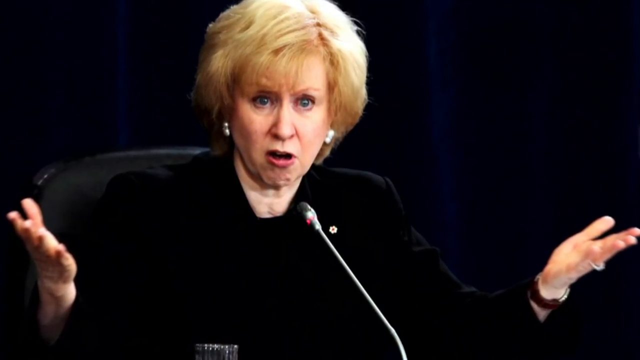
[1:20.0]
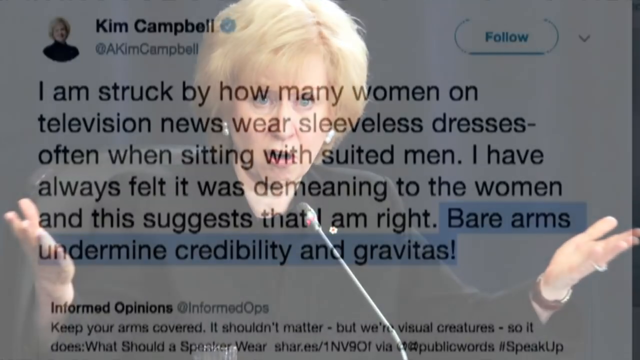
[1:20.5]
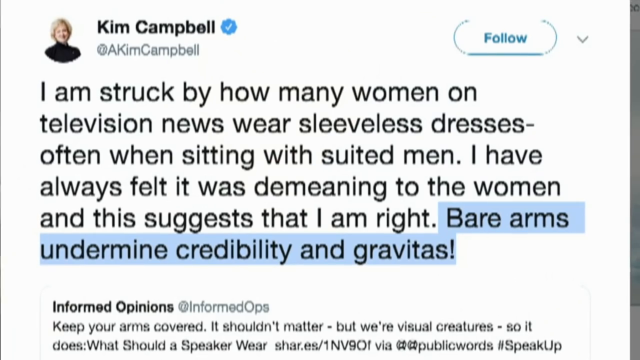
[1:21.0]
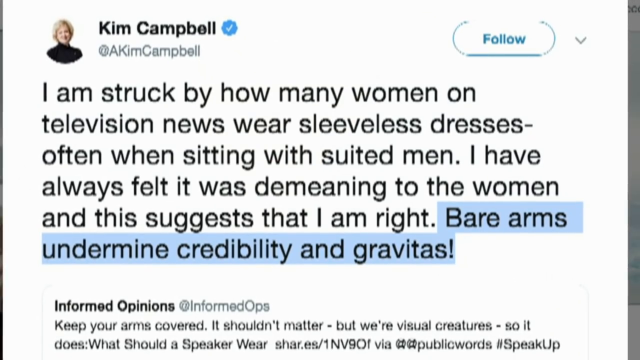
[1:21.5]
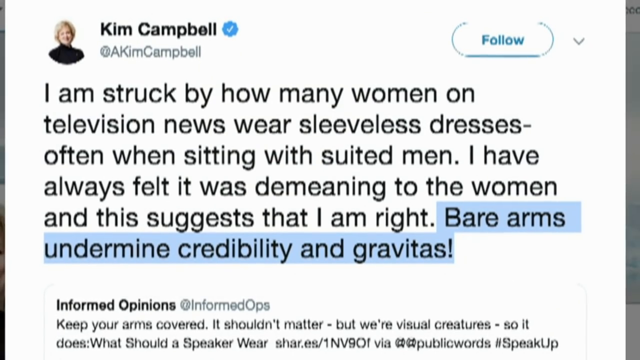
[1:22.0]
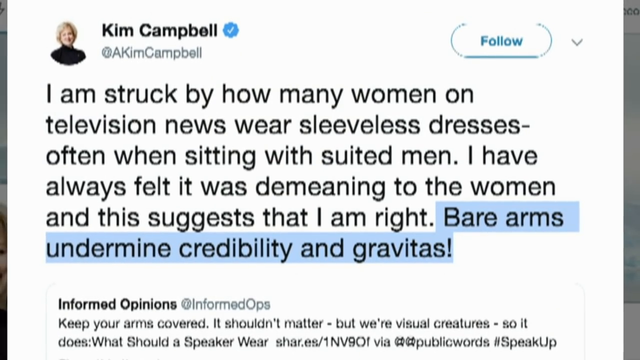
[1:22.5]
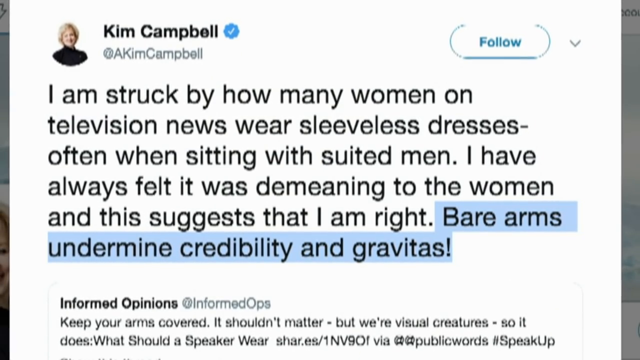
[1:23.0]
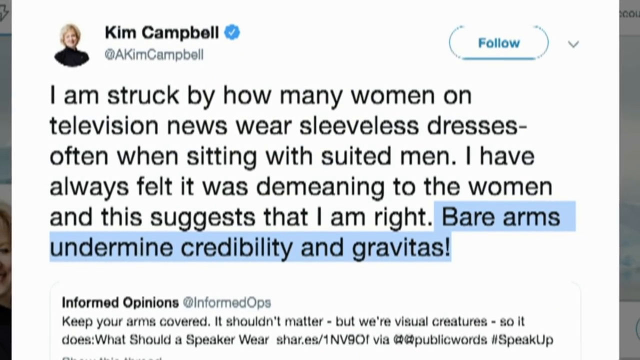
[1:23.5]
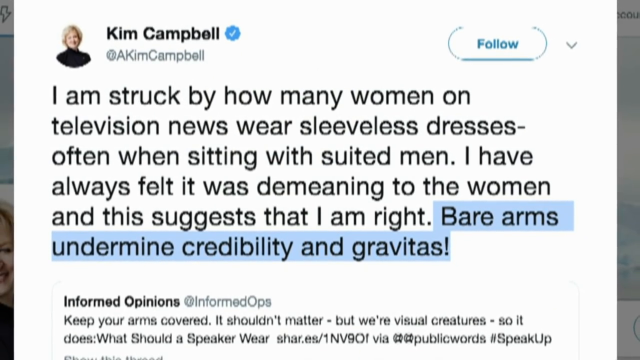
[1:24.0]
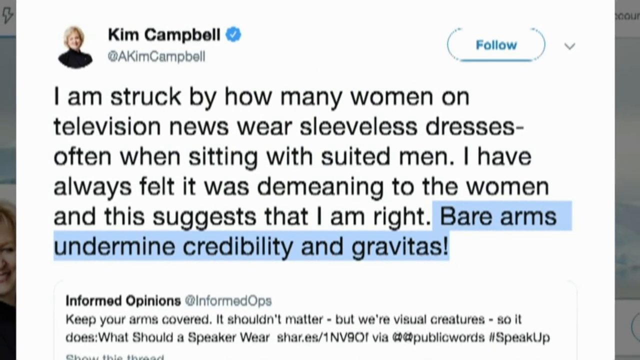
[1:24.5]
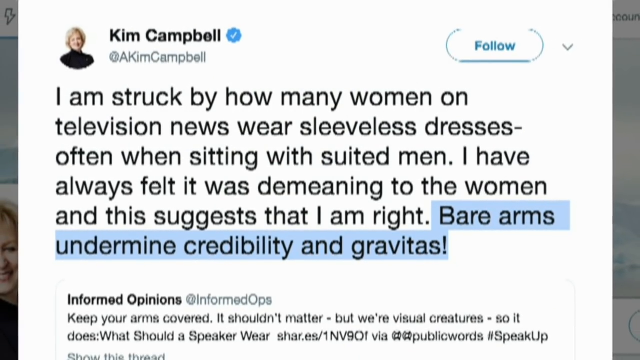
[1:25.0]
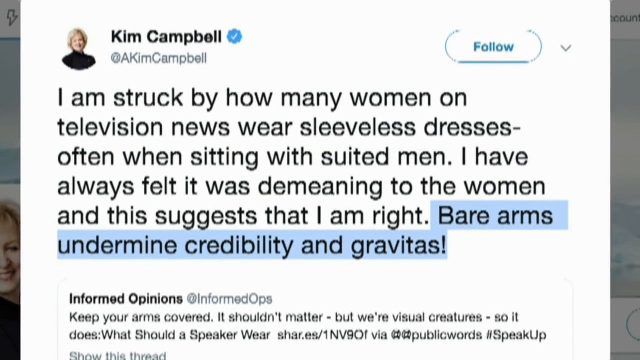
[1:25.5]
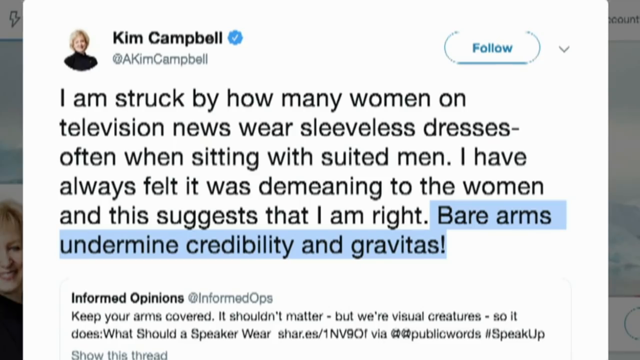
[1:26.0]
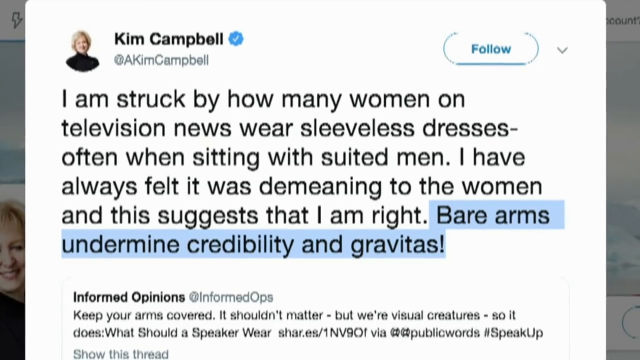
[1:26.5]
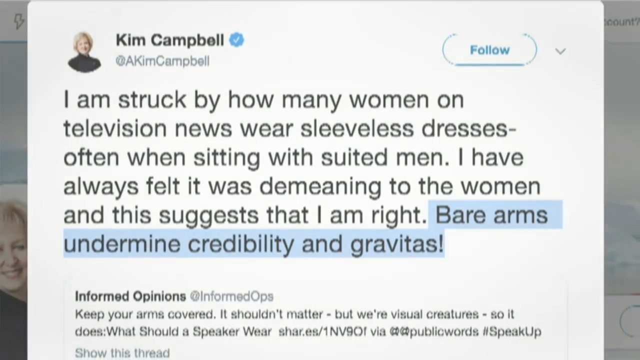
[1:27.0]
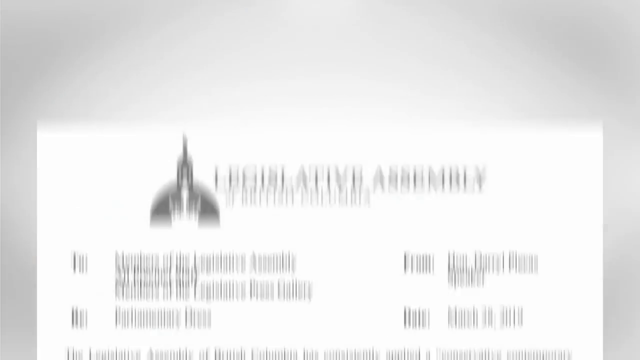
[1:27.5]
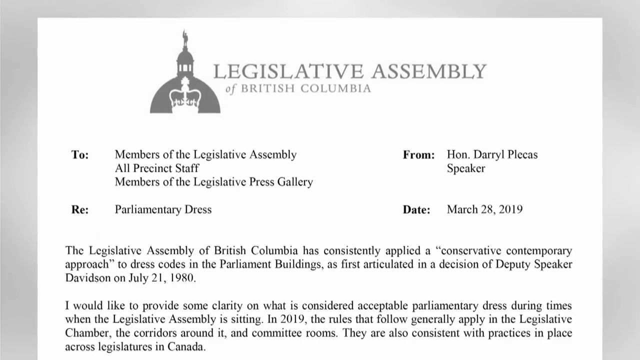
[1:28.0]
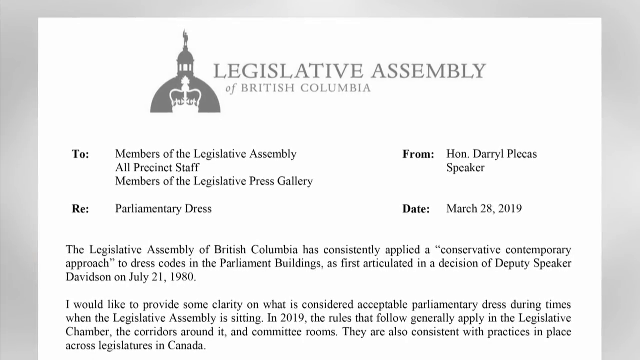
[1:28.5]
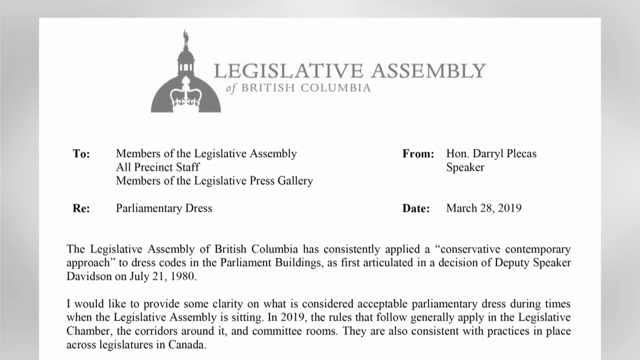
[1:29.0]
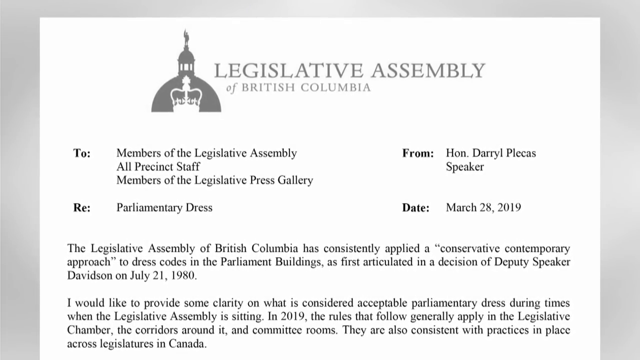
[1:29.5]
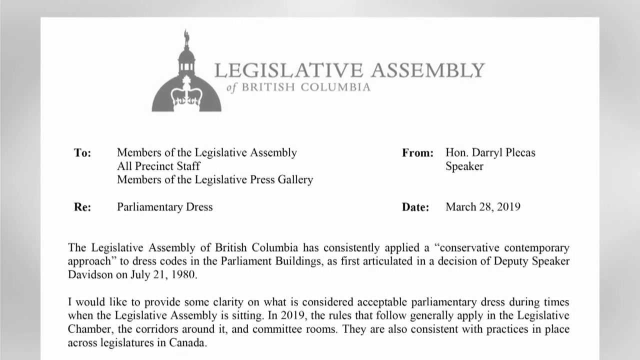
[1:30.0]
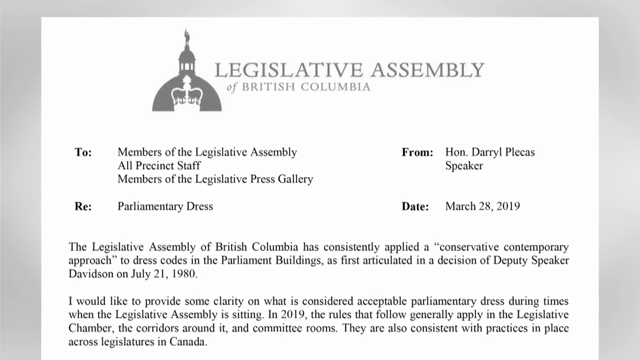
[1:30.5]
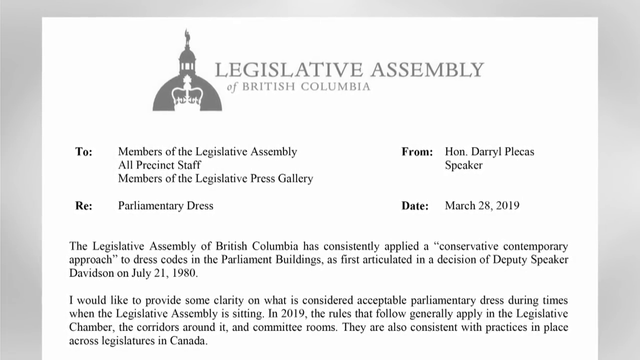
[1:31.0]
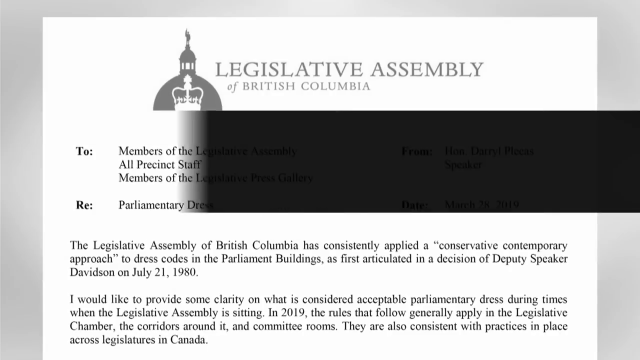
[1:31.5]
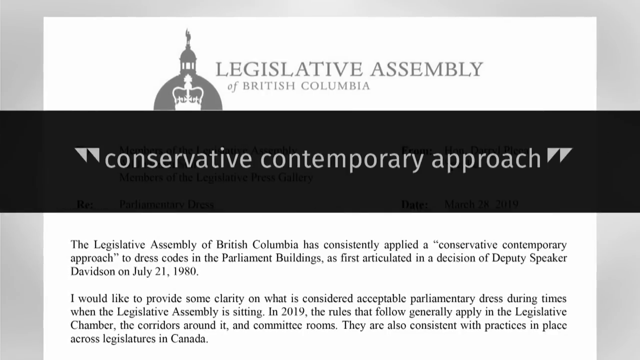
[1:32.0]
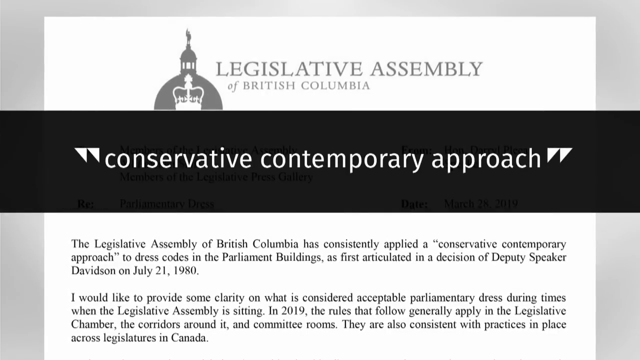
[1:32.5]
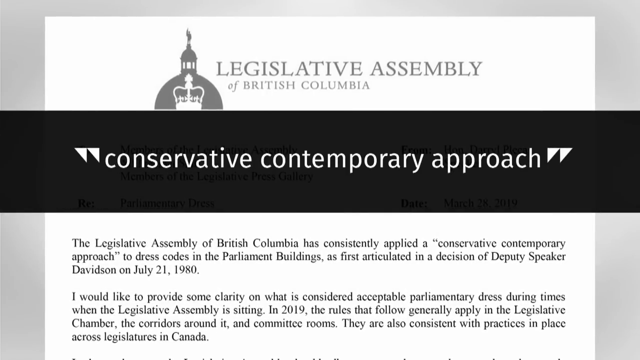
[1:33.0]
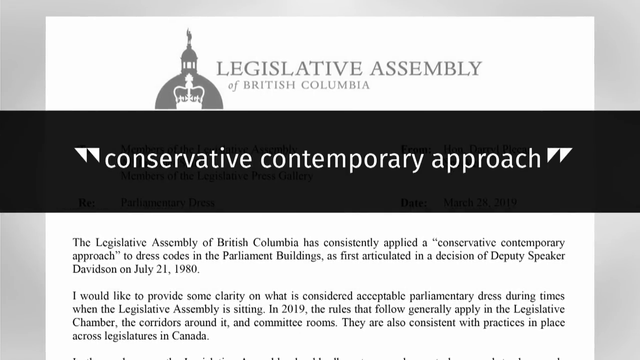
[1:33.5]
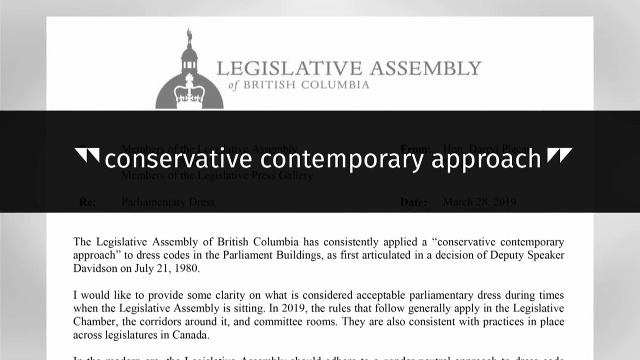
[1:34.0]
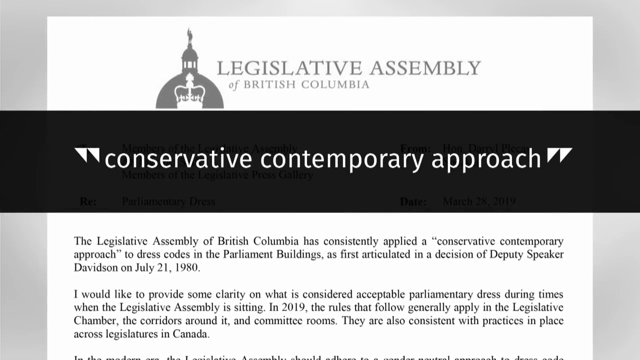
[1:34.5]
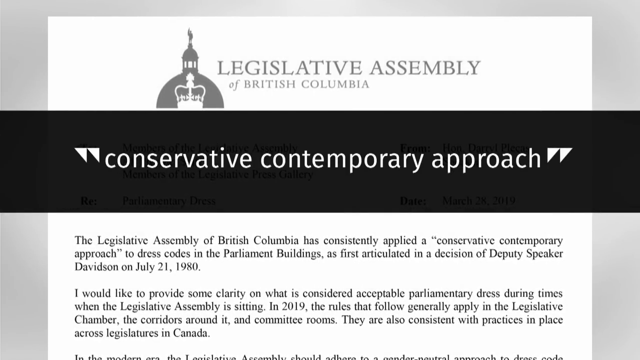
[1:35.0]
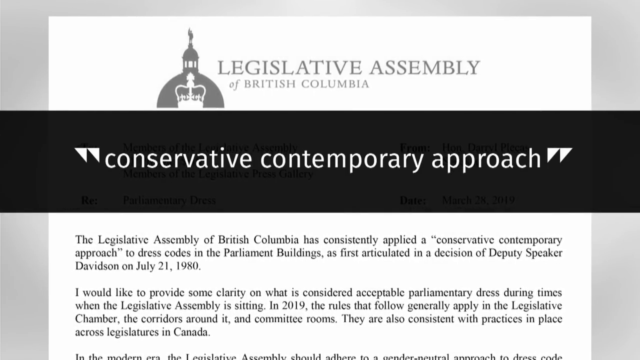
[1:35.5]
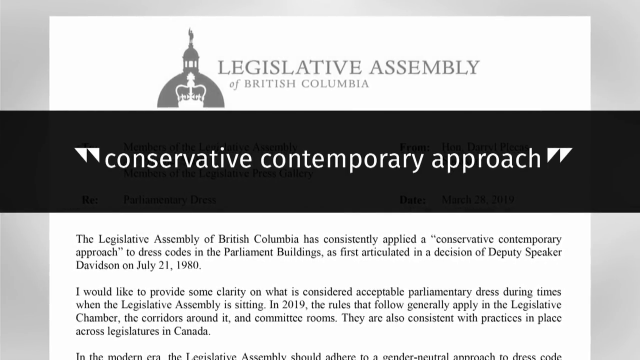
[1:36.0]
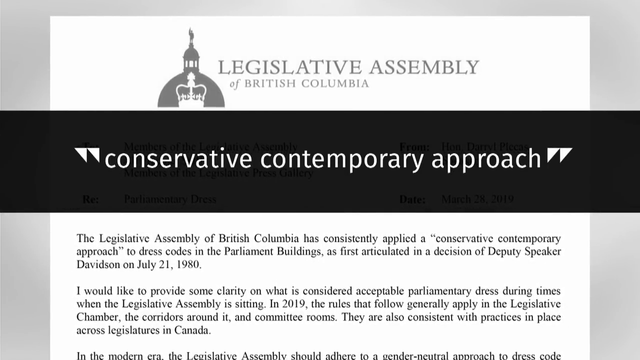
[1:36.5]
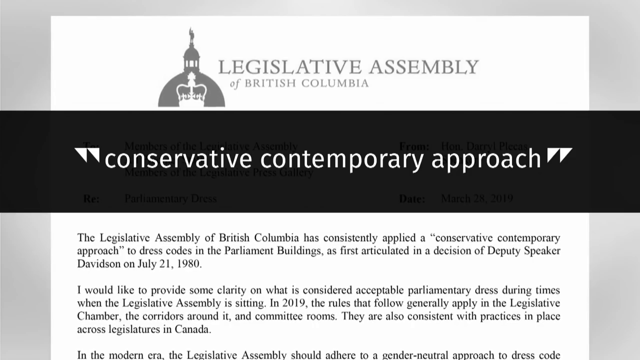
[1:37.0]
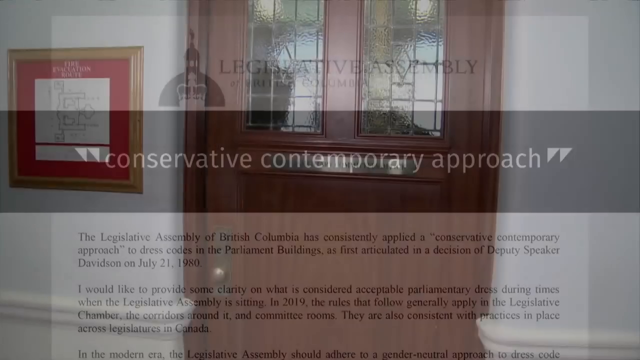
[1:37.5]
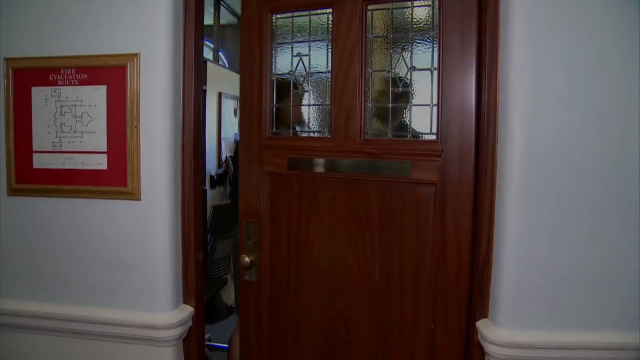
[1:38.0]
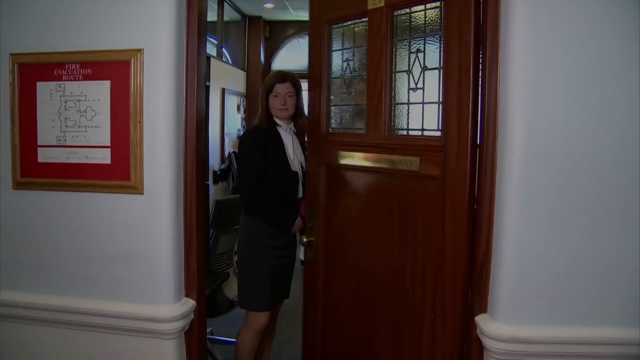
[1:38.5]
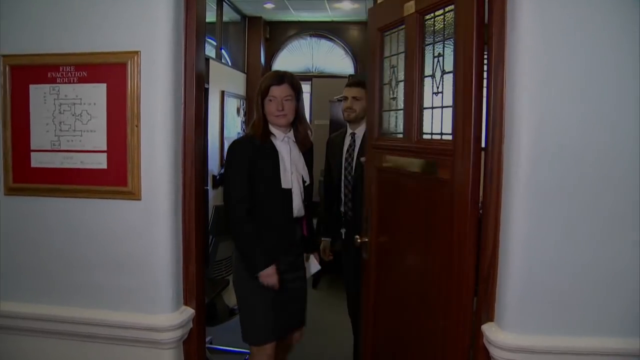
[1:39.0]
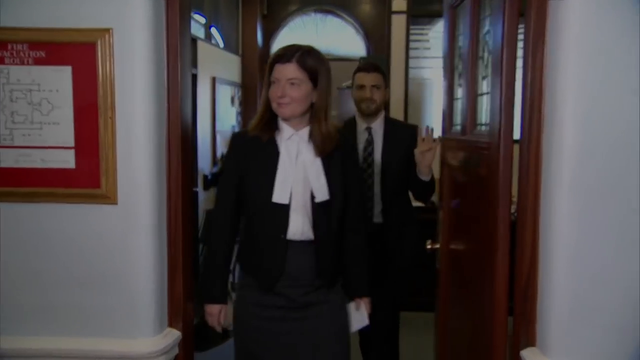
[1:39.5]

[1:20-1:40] A picture shows a white woman with blue eyes and short, messy blonde hair sitting on a black chair in front of a microphone, raising both hands to the sides of her body with her palms pointing to the ceiling. The picture dissolves into a tweet by Kim Campbell, who, judging by the profile picture, seems to be the same woman. It reads: "I am struck about how many women on television news wear sleeveless dresses often when sitting with suited men. I have always felt it was demeaning to the women and this suggests that I am right. Bare arms undermine credibility and gravitas." Next comes a document of the Legislative Assembly of British Columbia dated March 28, 2019, from Hon. Darryl Plecas, Speaker, to the members of the Legislative Assembly, all present staff and members of the Legislative Press Gallery. It states that the Legislative Assembly has consistently applied a conservative contemporary approach to dress codes in the Parliament buildings, as first articulated in a decision of Deputy Speaker Davidson on July 21, 1980, and that it aims to clarify what is considered acceptable parliamentary dress while the Legislative Assembly is sitting. The phrase "conservative contemporary approach" appears. Finally, a wooden door opens and a woman and a man enter a room.